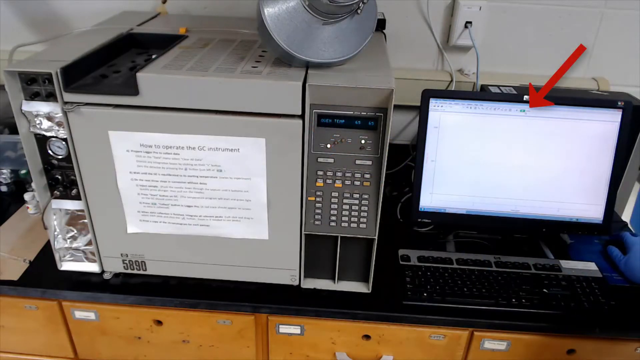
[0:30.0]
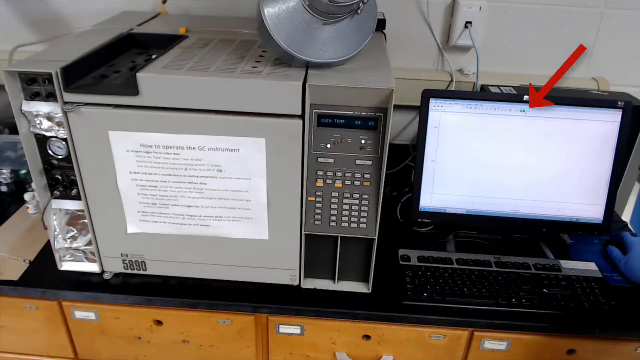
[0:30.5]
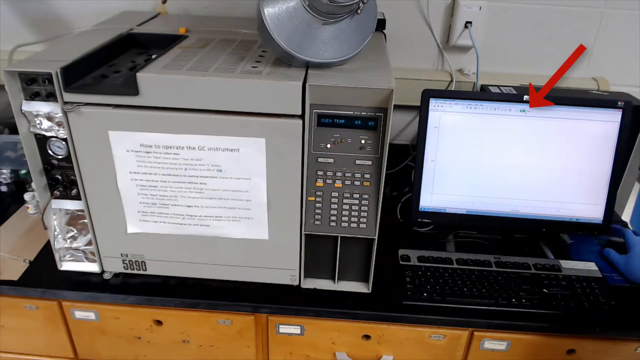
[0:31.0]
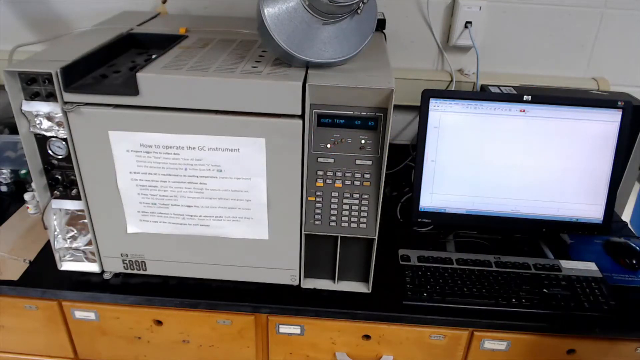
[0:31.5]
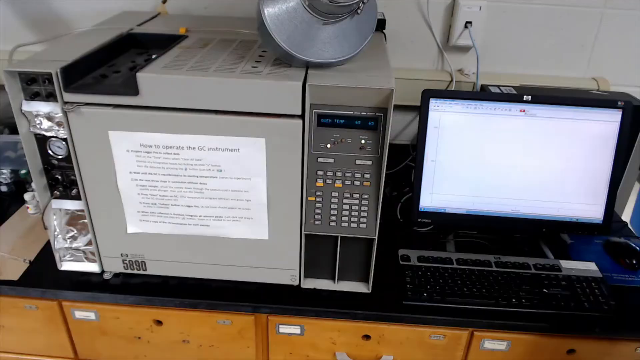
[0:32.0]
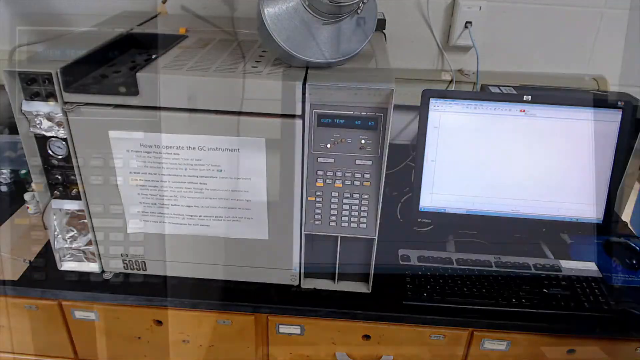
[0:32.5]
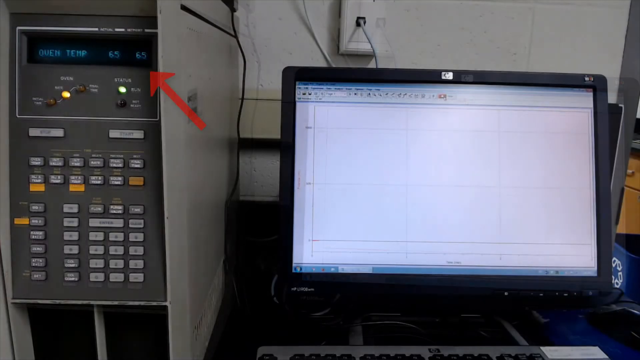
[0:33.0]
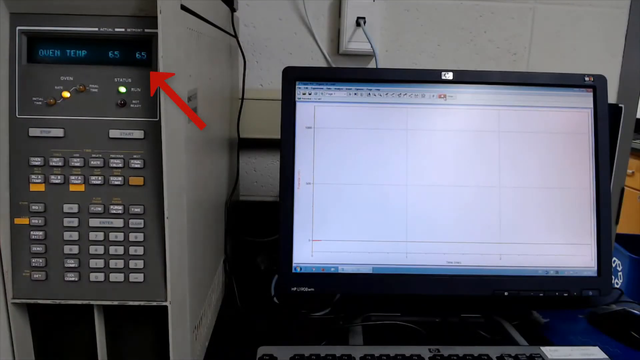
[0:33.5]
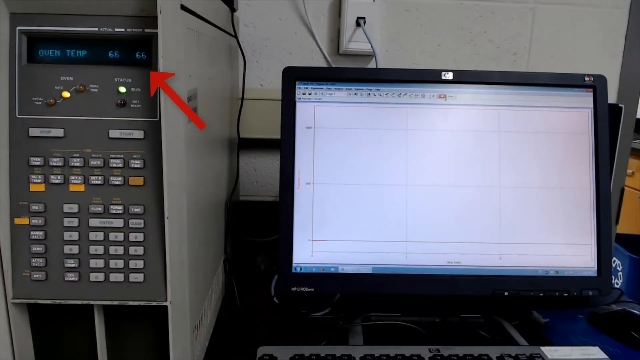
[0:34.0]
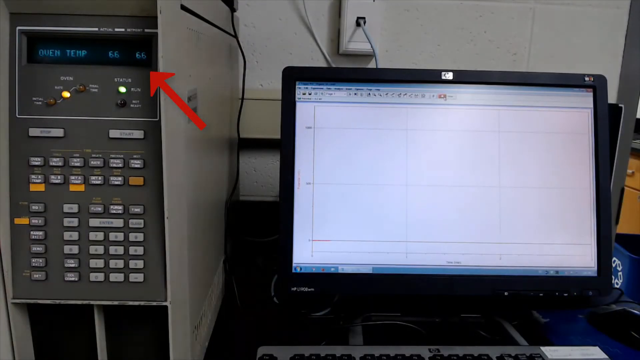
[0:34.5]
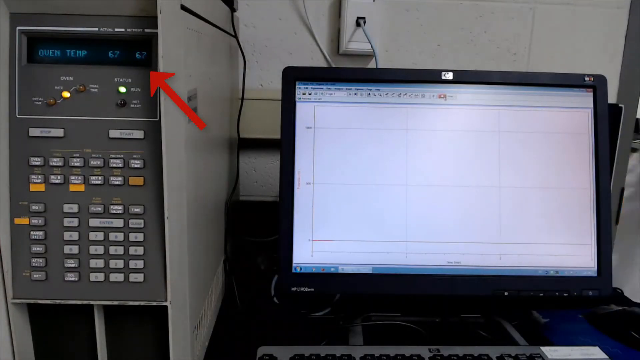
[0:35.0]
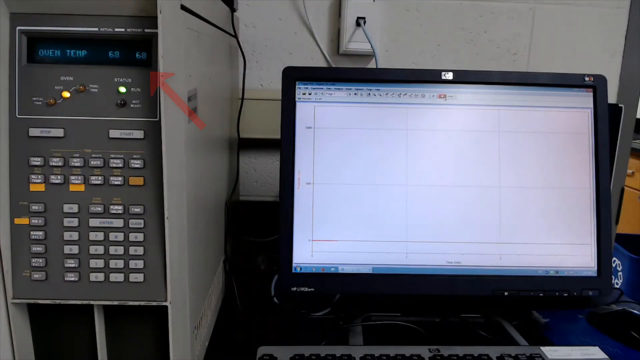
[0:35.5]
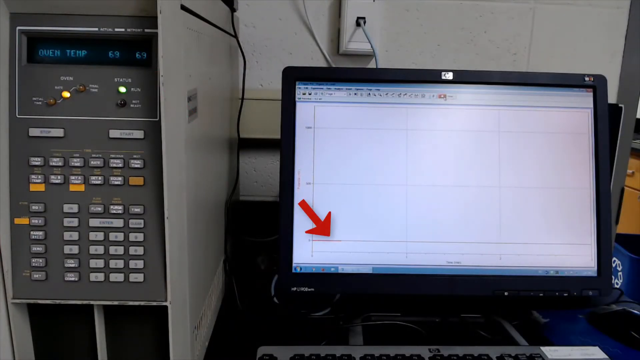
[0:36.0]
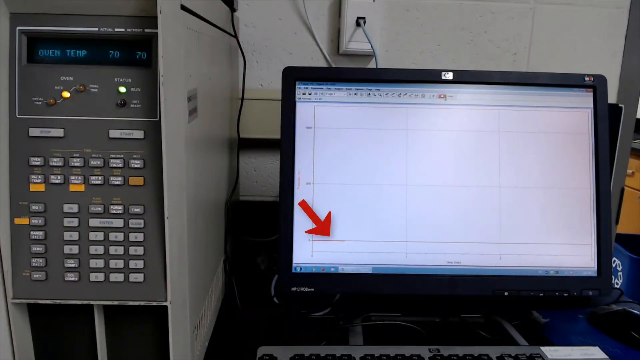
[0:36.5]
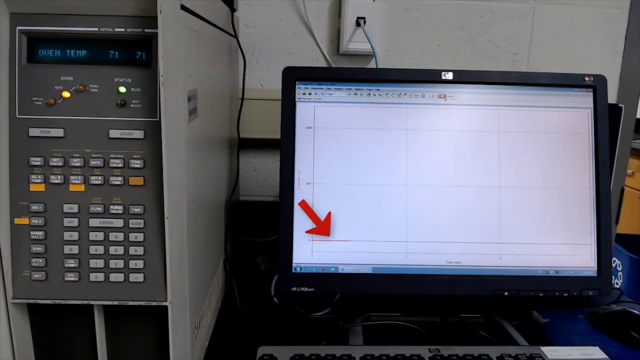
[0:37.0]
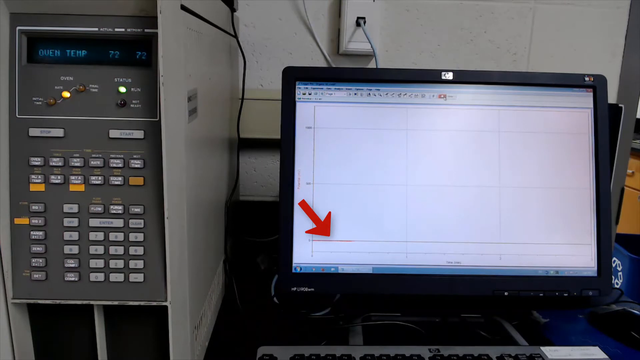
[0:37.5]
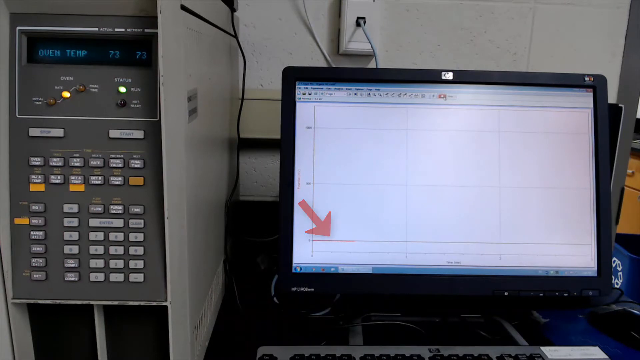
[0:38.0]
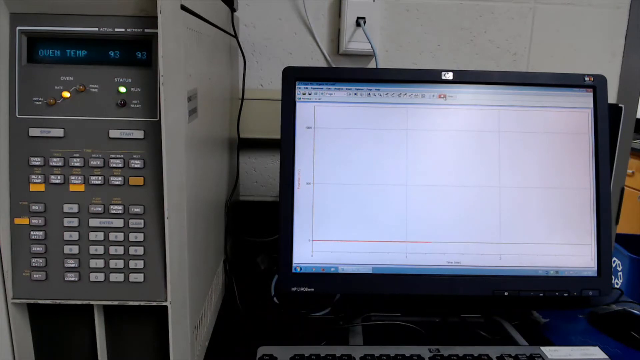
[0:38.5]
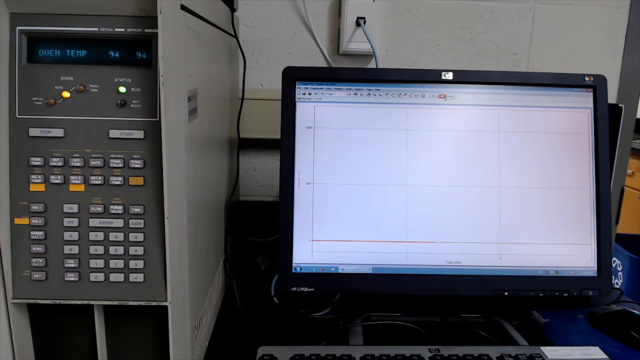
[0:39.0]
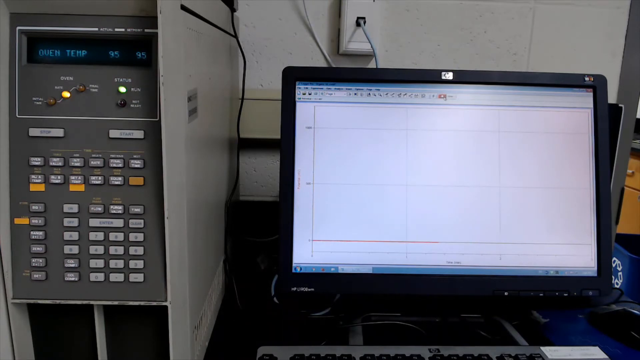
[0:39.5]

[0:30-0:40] A green dot points at something on the black laptop screen, and a red one points at the lab machine. No person is visible; only a blue glove holding a laptop can be seen, with no face shown. The shot shows just the laptop and the machine in the lab.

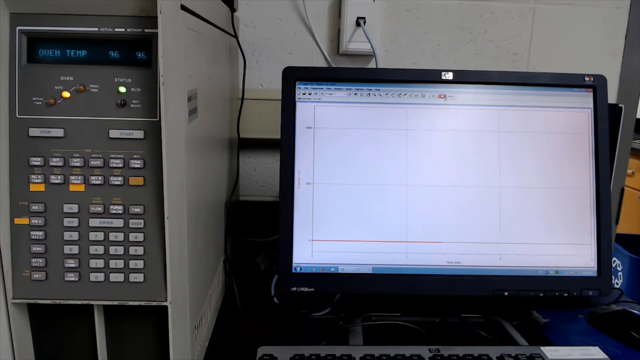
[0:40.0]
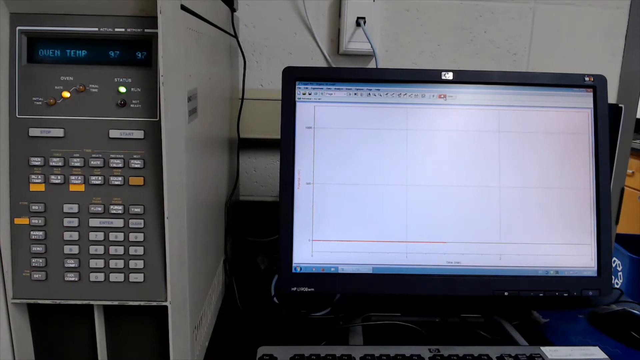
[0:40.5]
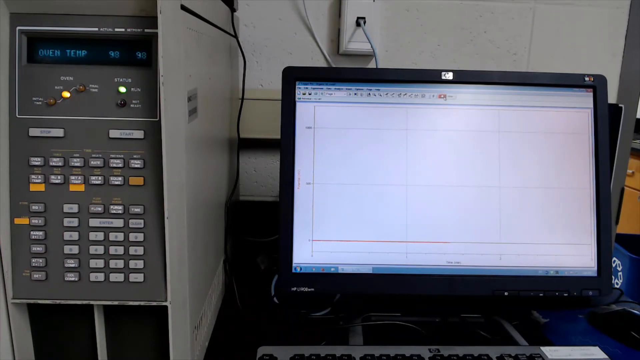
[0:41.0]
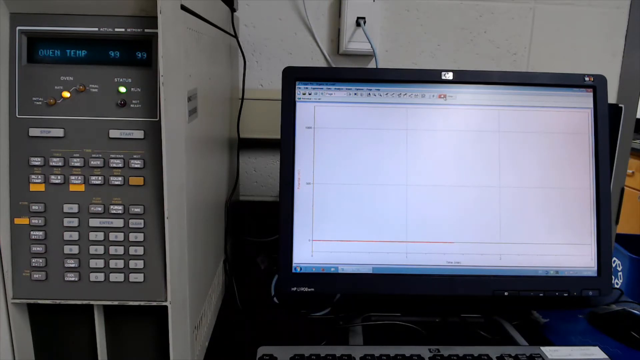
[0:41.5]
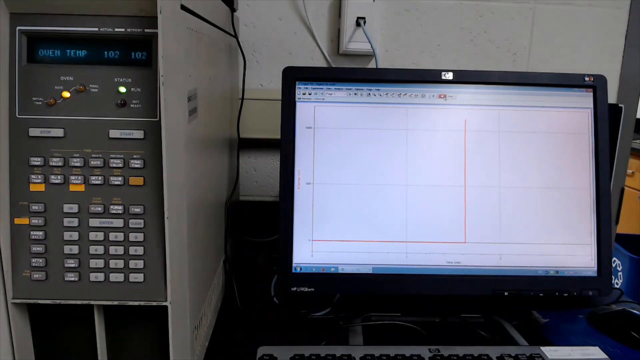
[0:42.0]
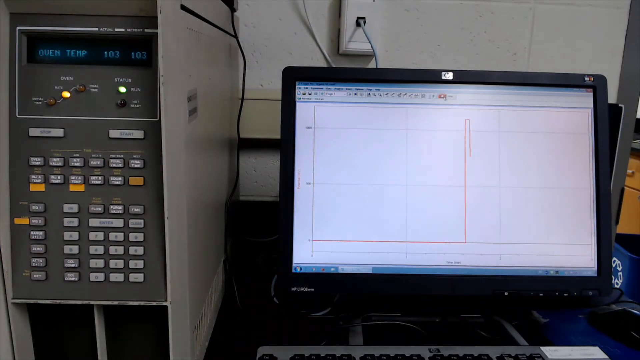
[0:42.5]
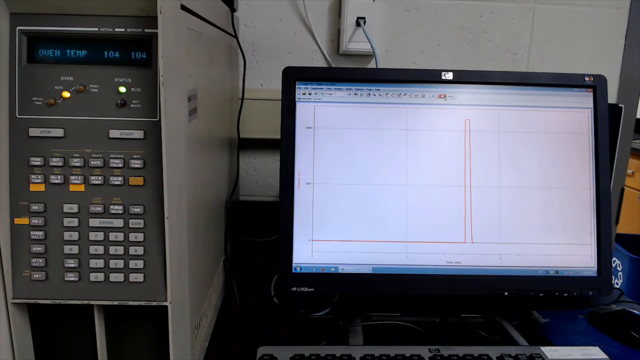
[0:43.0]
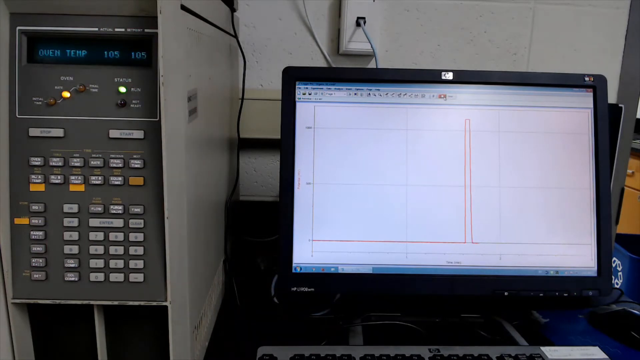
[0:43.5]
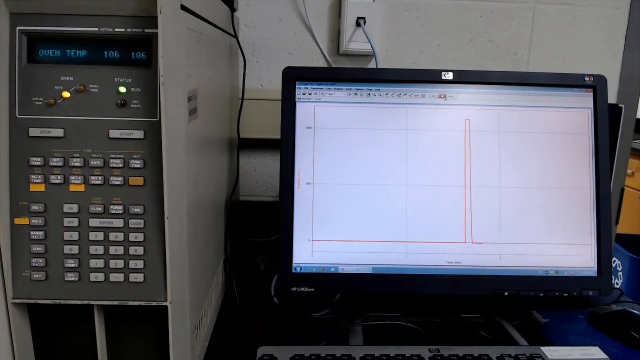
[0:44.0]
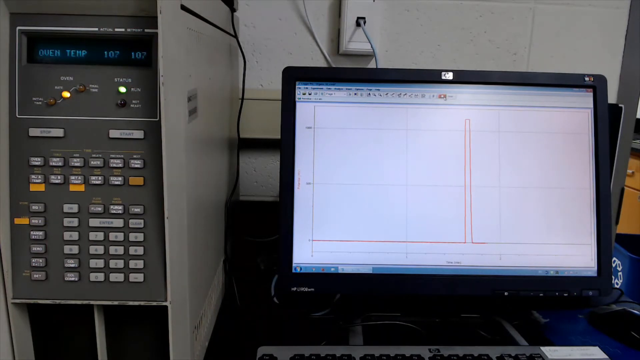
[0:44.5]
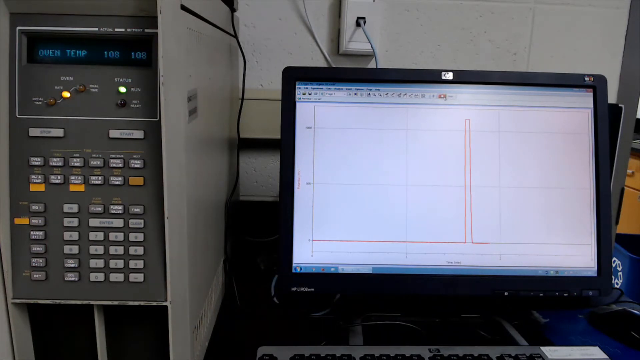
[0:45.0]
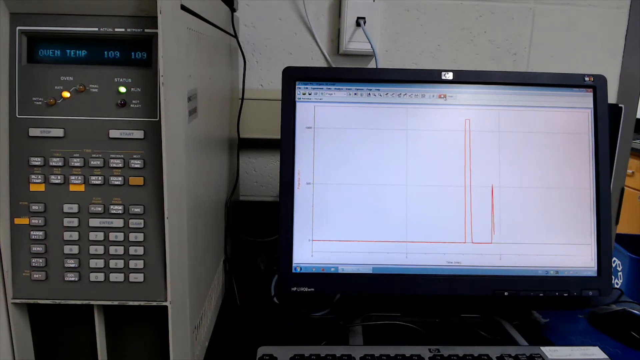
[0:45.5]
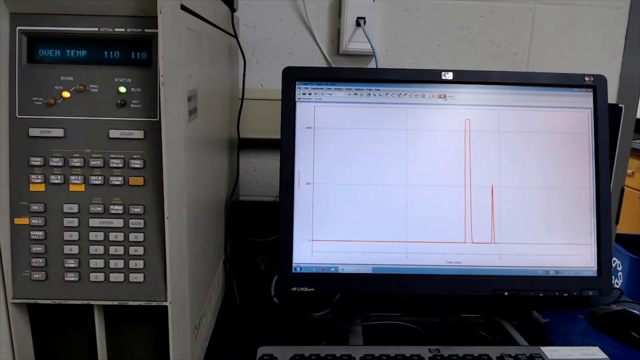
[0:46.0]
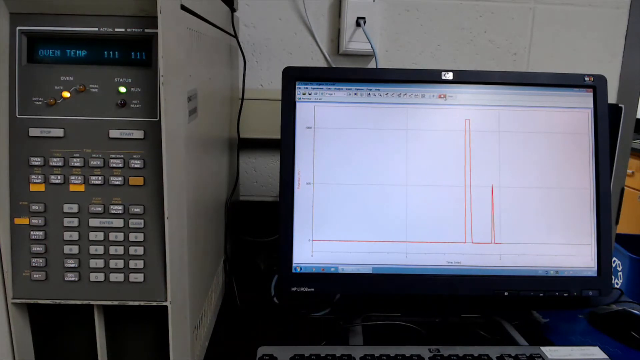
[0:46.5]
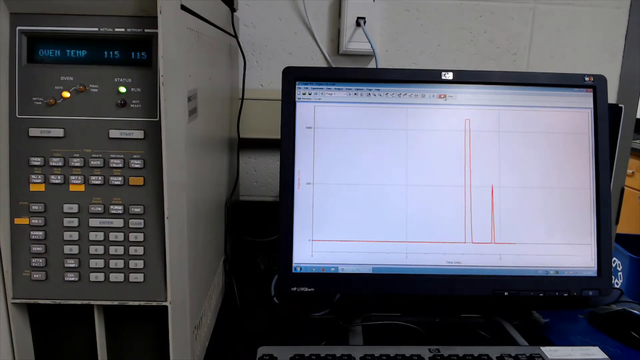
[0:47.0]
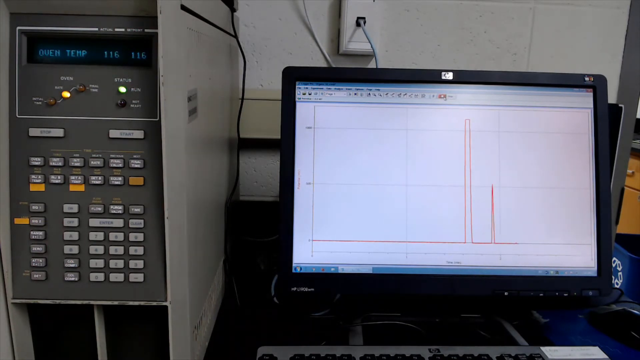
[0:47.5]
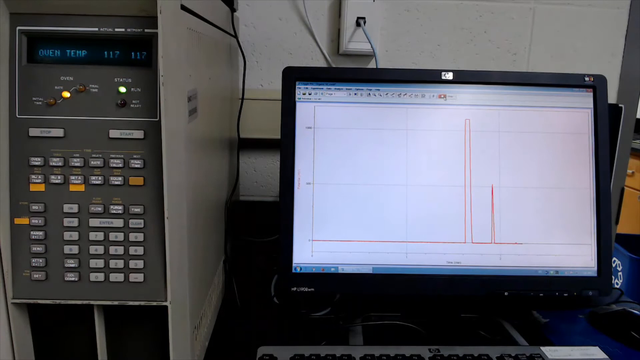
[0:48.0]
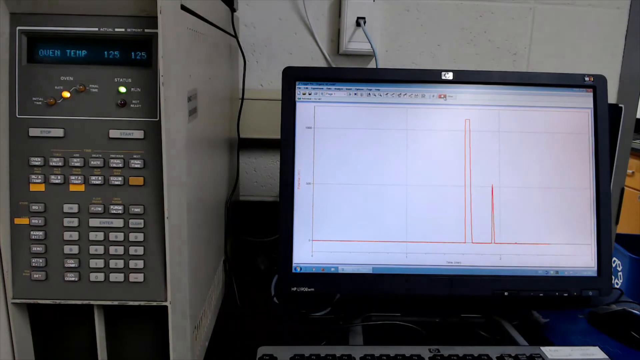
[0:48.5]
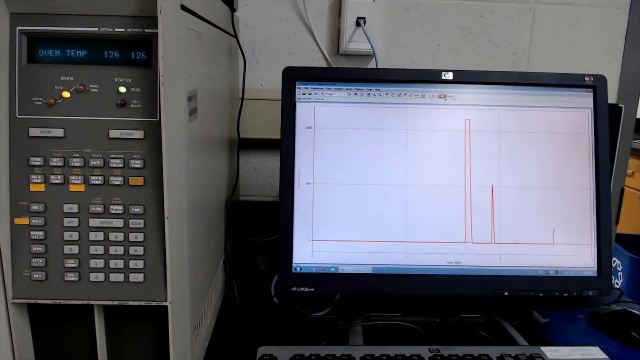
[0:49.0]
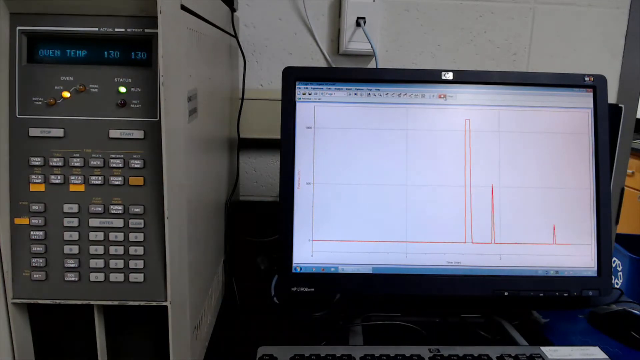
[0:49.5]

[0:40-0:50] The laptop is now on and displays two yellow lines, apparently indicating that a chemical in the machine is being tested. No one is in the shot; there is only the testing machine and the black laptop, which appears to be in the process of testing a chemical in what seems to be a chemistry experiment.